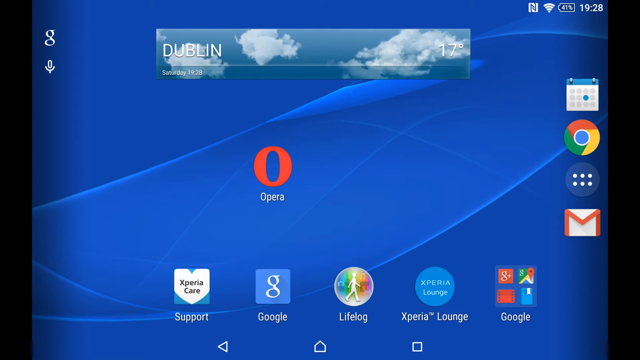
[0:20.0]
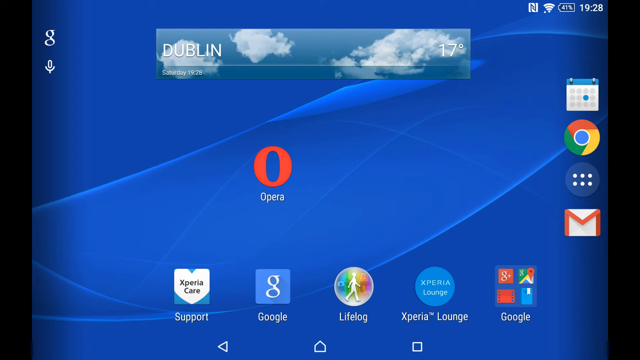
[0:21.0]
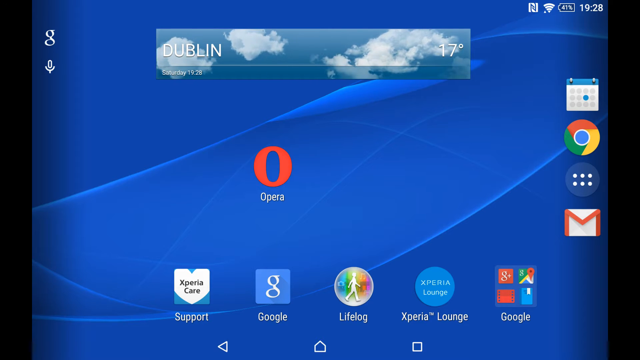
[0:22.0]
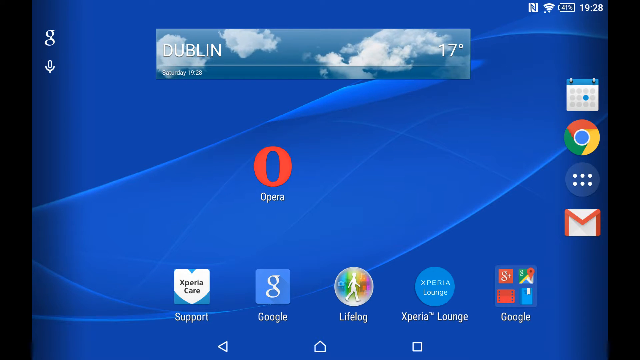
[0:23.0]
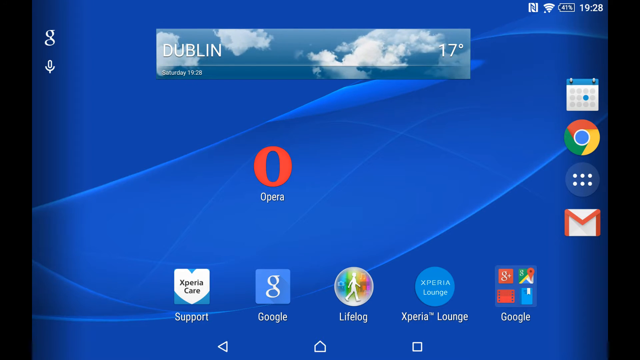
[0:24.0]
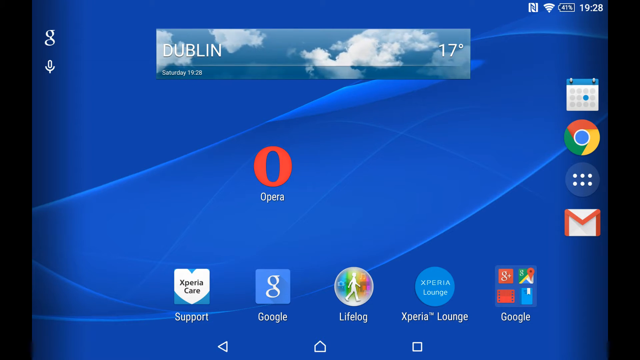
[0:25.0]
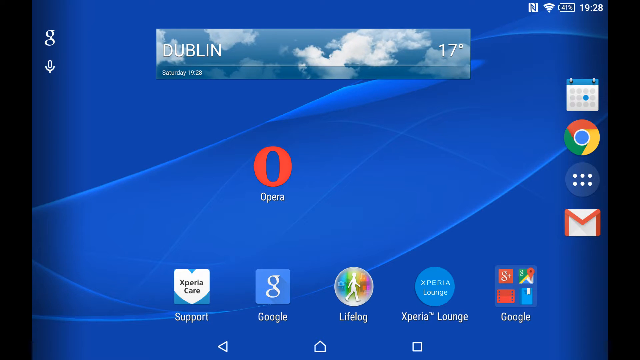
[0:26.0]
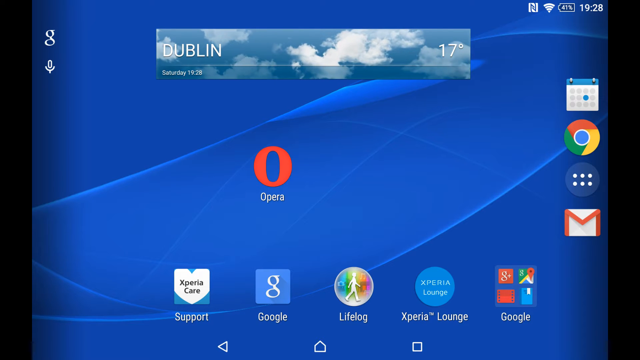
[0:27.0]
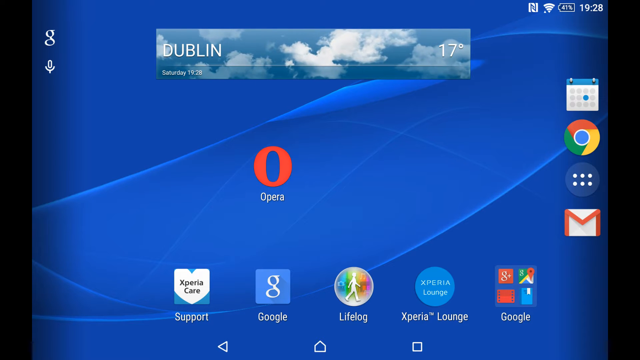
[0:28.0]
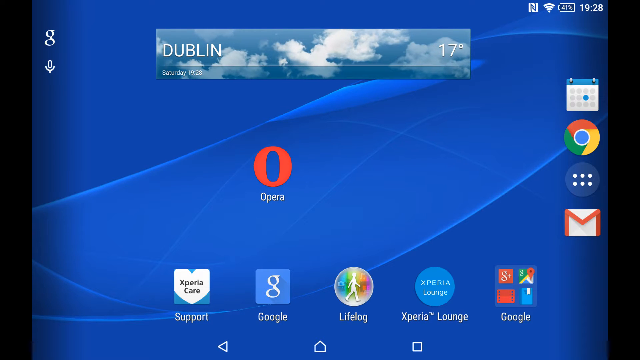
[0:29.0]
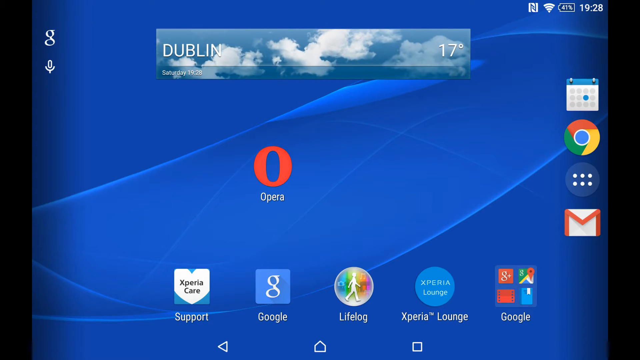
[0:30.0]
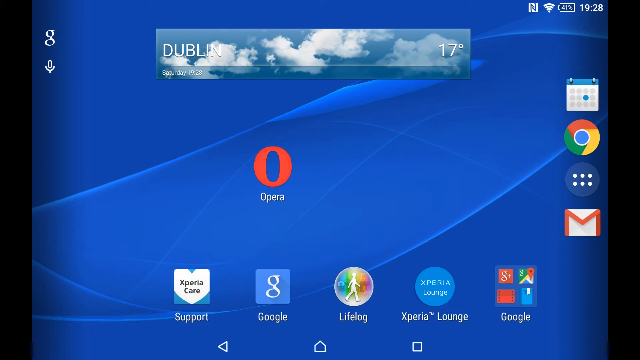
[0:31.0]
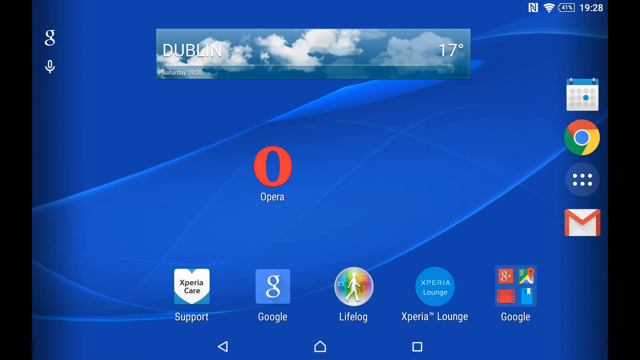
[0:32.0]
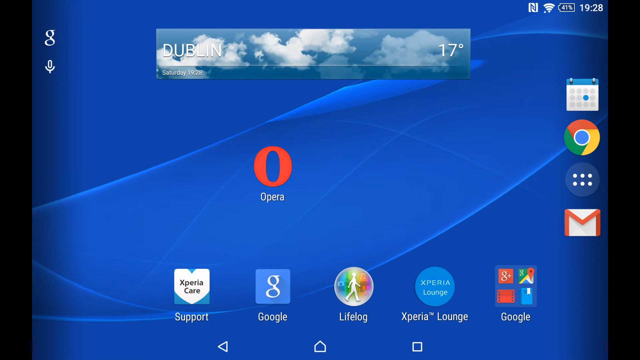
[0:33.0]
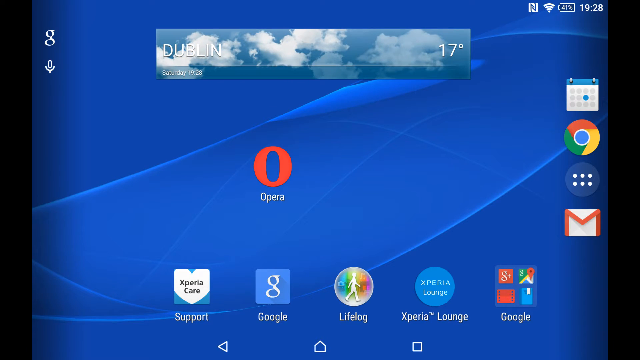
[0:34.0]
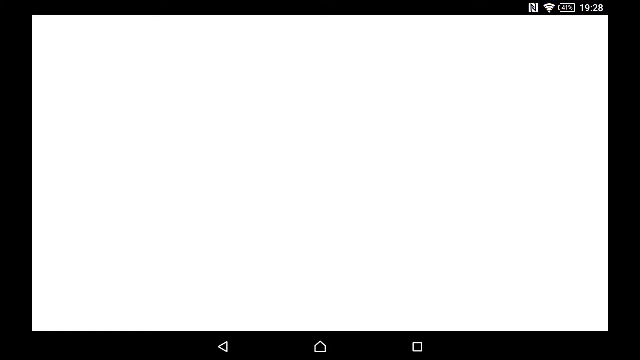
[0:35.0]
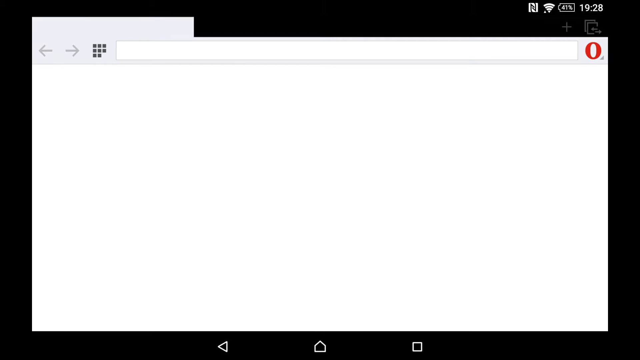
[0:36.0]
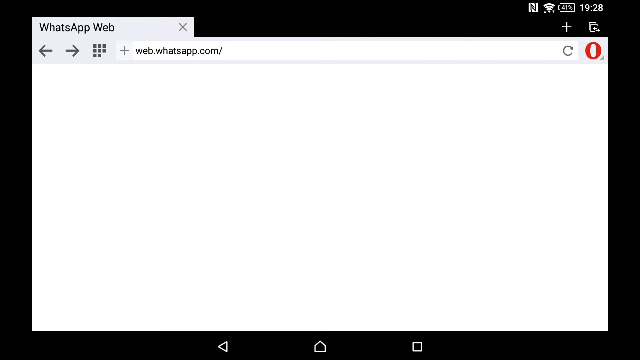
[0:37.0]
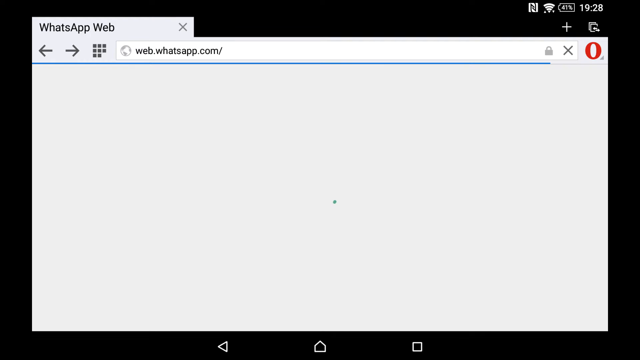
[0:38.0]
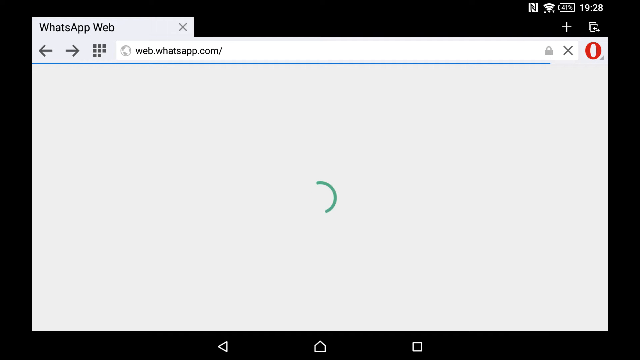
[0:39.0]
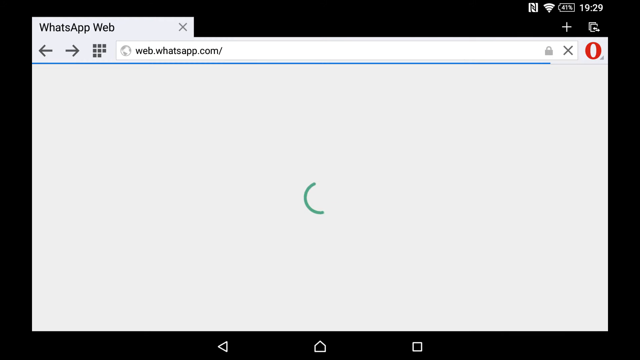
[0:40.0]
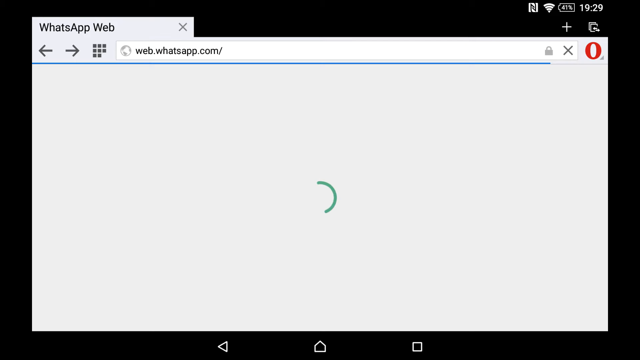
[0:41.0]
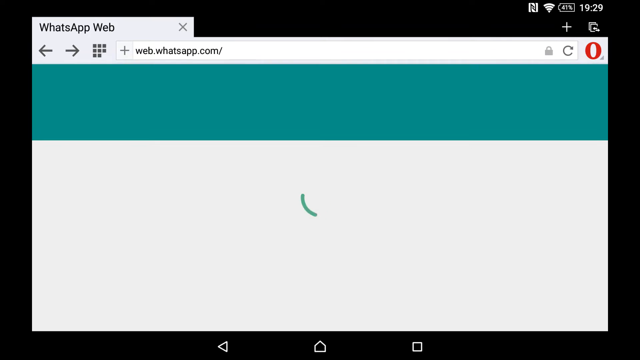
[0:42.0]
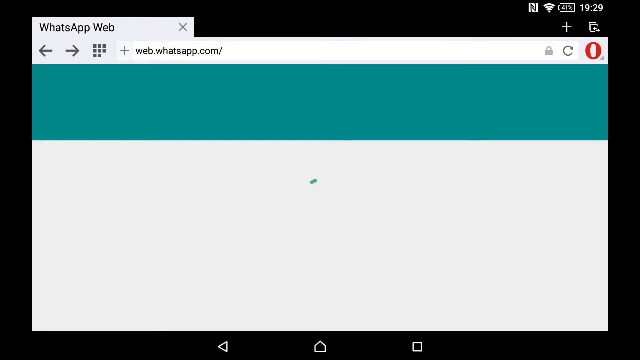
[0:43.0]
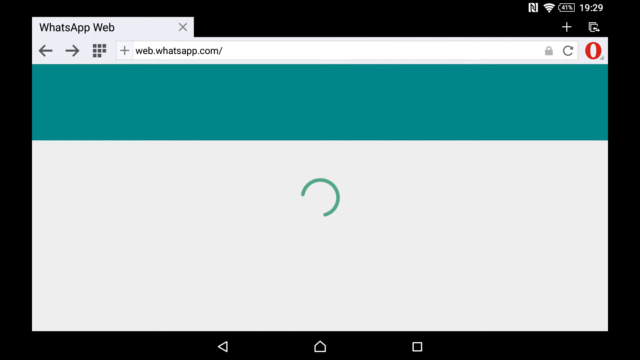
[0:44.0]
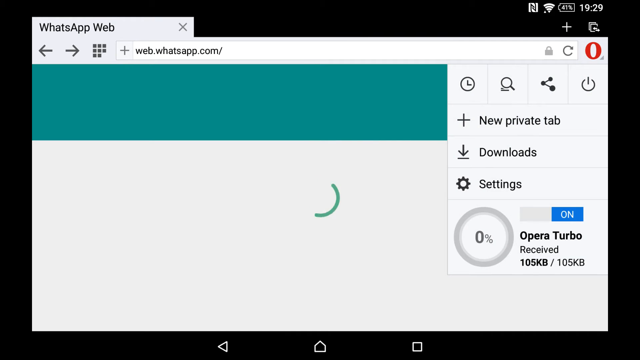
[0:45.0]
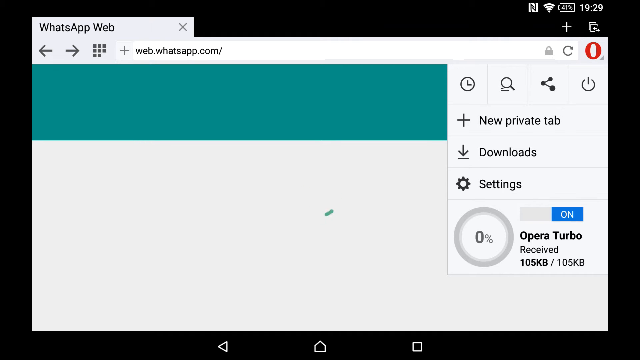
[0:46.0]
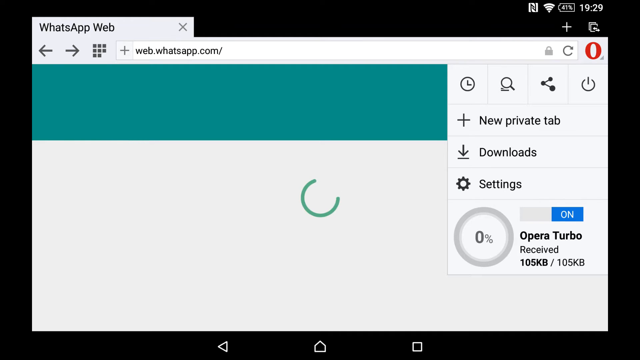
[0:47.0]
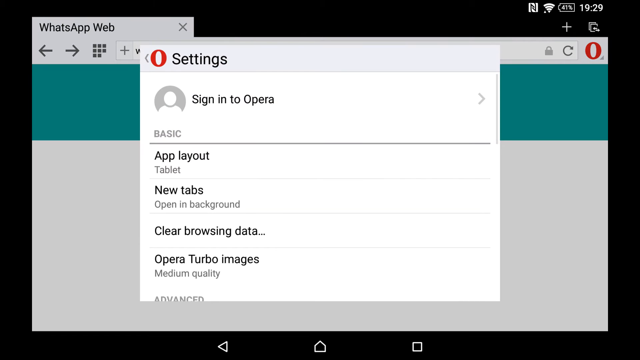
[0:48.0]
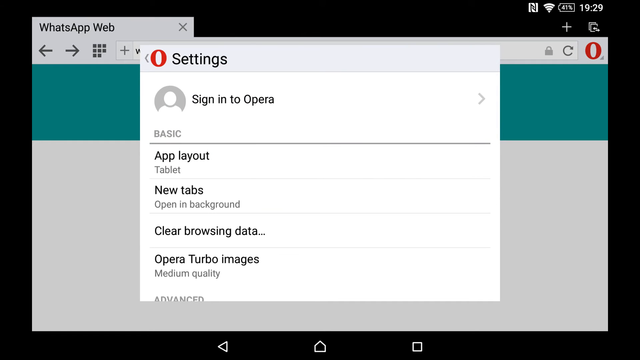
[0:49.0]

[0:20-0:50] A longer rectangular box shows moving clouds in the background, with Dublin, the time 19:28 and 17 degrees displayed; the screen does not say whether it is Celsius or Fahrenheit. There is a strong Wi-Fi signal. The Android tablet's home screen shows Google, a microphone and a number of Google apps. The screen then switches as the user starts using the tablet: they go into WhatsApp, and inside it they appear to be signing into the Opera app. The screen changes from blue to white, like a web interface, and the user seems to start looking things up. The Opera app appears to take them to WhatsApp, a turquoise screen with a green spinning dot, and they seem to be looking at the settings as they move through different apps.